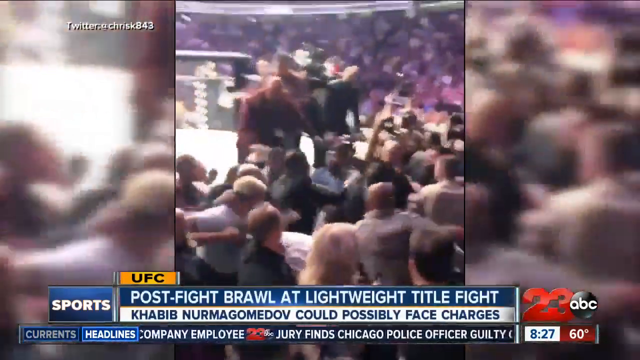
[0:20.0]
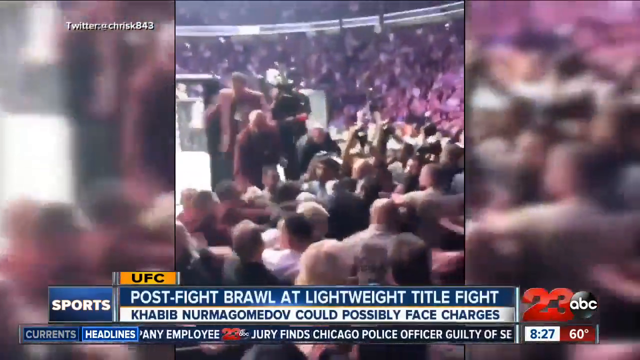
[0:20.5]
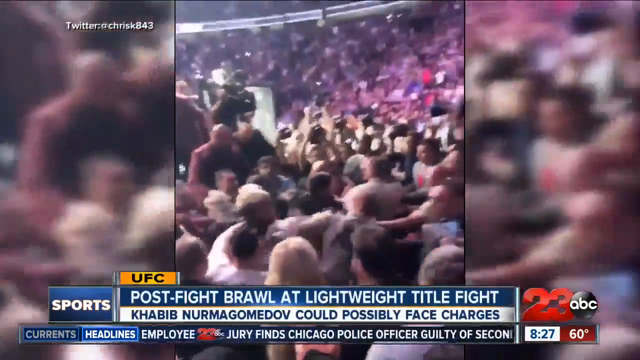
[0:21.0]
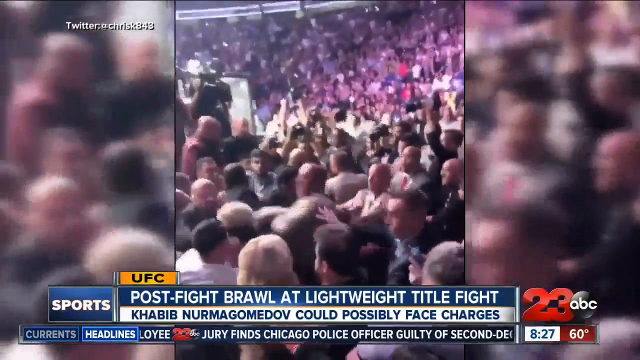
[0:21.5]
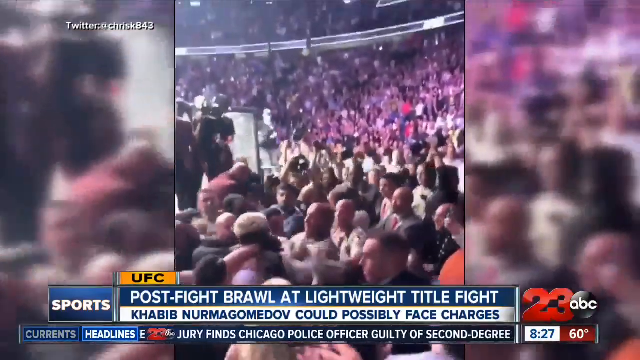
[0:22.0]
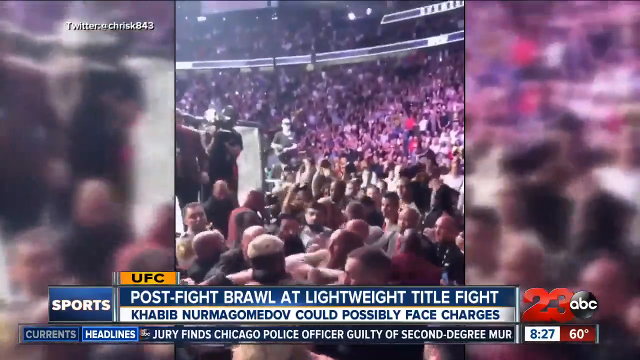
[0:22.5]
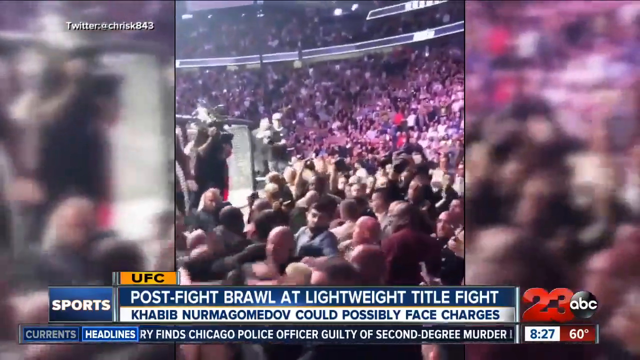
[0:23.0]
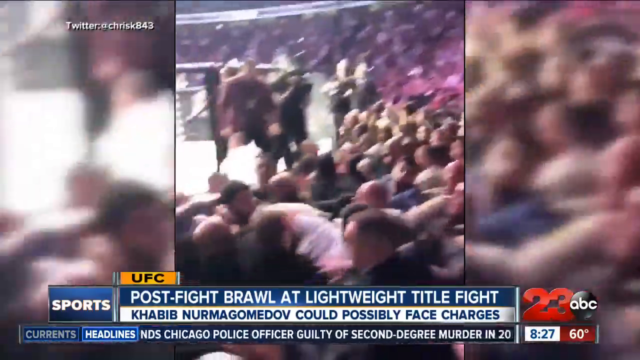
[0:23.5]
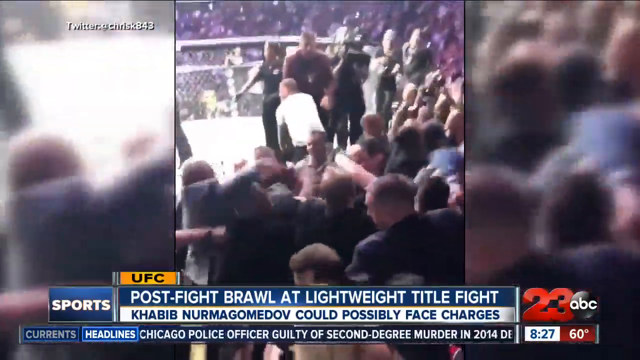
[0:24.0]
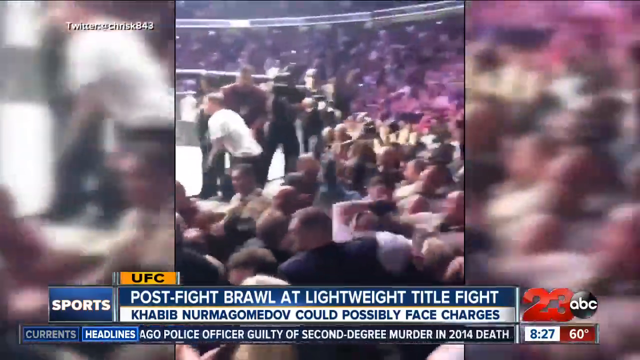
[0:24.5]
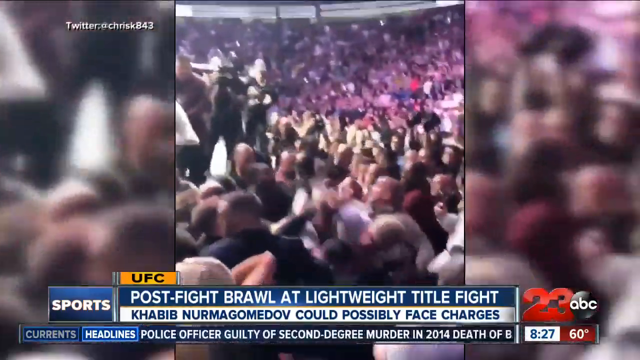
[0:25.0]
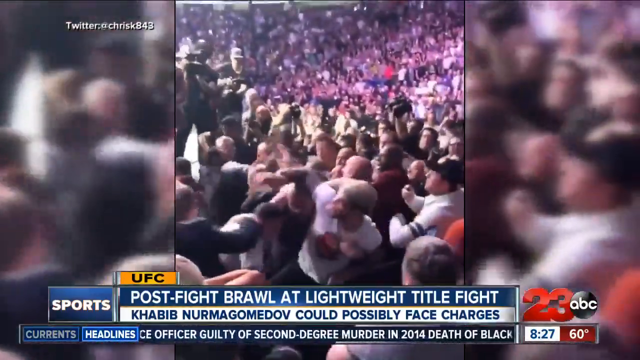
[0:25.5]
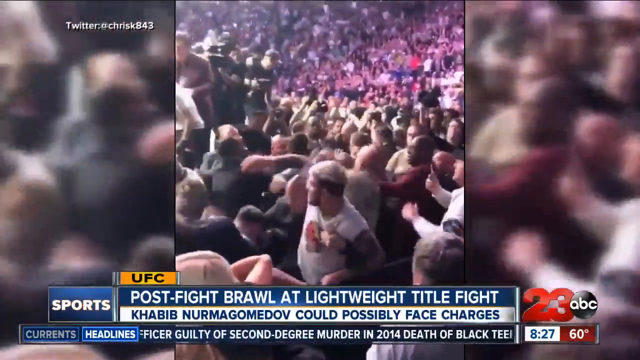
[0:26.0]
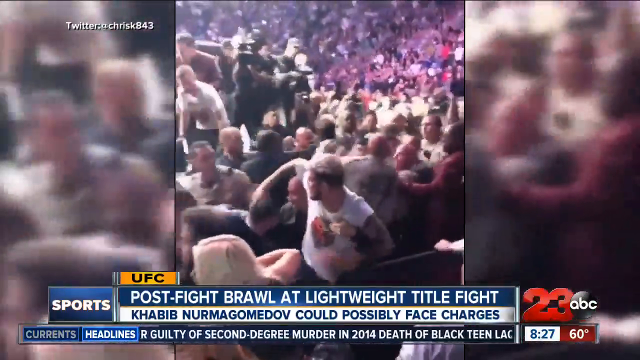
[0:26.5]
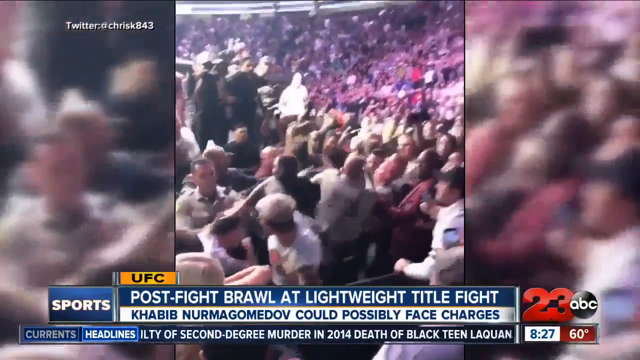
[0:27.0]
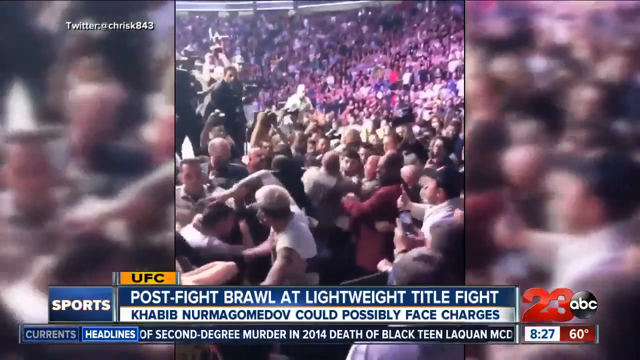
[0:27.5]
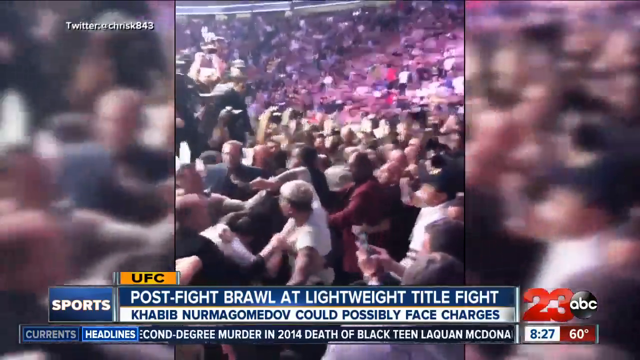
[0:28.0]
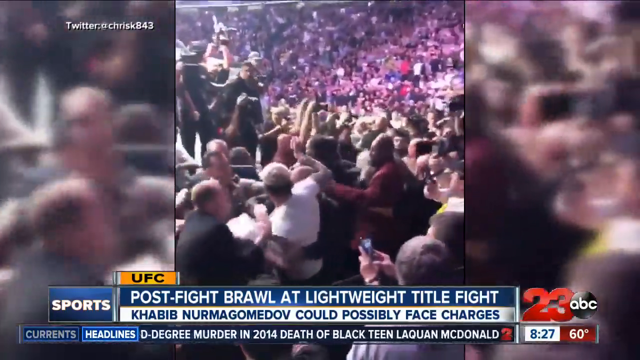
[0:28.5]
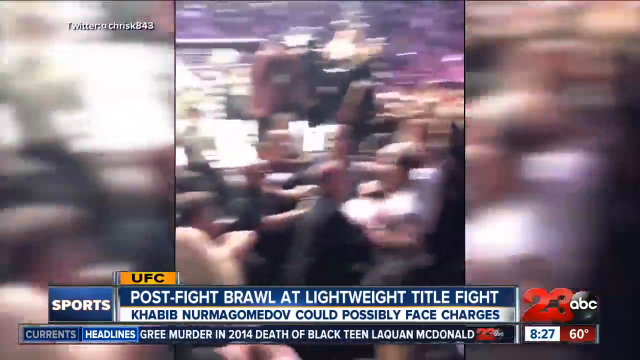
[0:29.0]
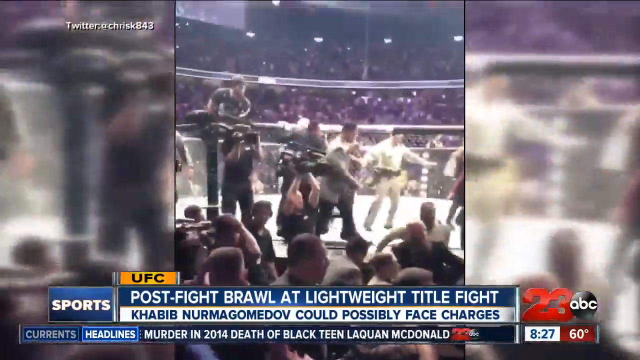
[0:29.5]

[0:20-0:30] Footage of the incident plays with on-screen text about a post-fight brawl after a lightweight title fight, mentioning Khabib and that someone "could possibly face charges." A man looks like he jumps out of the stands. The report is from 23 ABC News, and "Twitter" appears at the top of the screen. People throw punches throughout the stands, and several people hold cameras, though the footage is very shaky. The camera focuses back on the ring, where people are fighting and throwing punches.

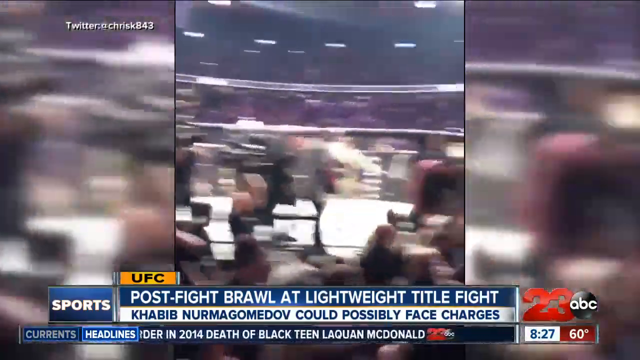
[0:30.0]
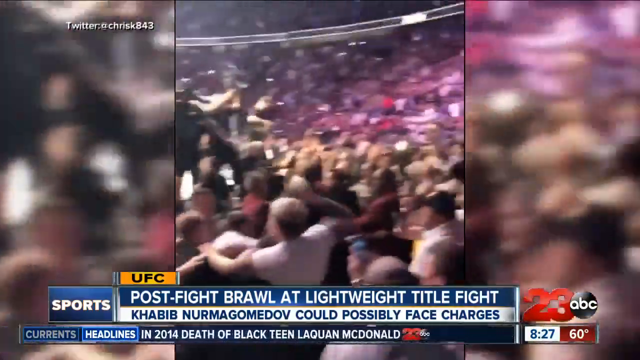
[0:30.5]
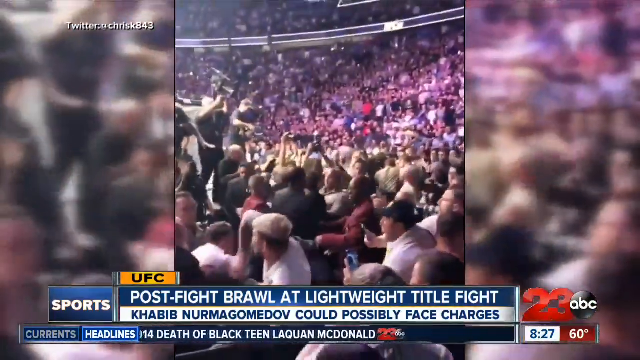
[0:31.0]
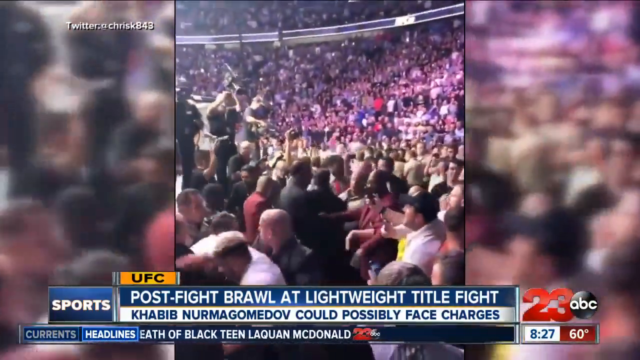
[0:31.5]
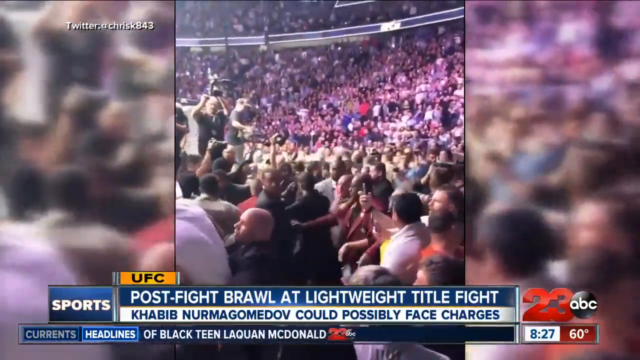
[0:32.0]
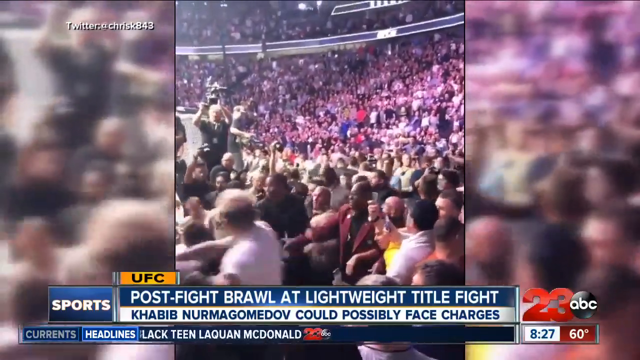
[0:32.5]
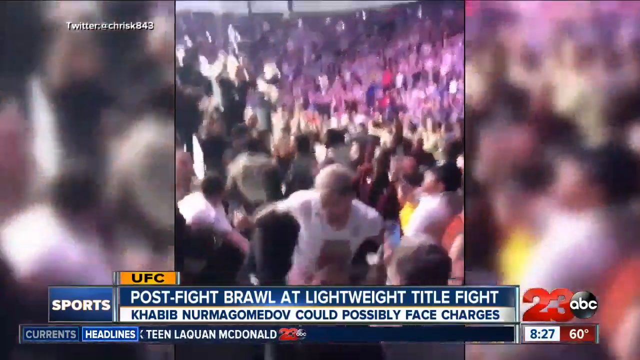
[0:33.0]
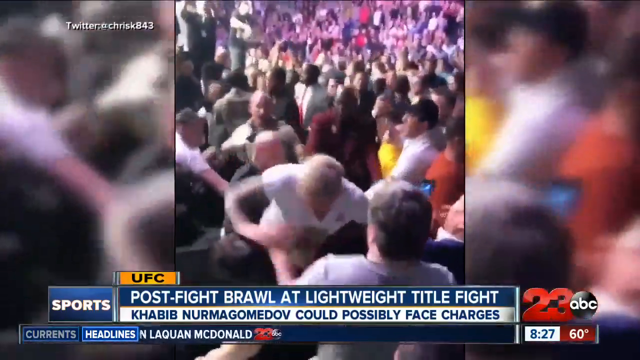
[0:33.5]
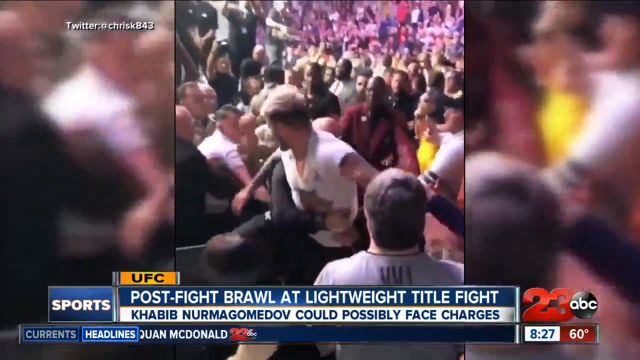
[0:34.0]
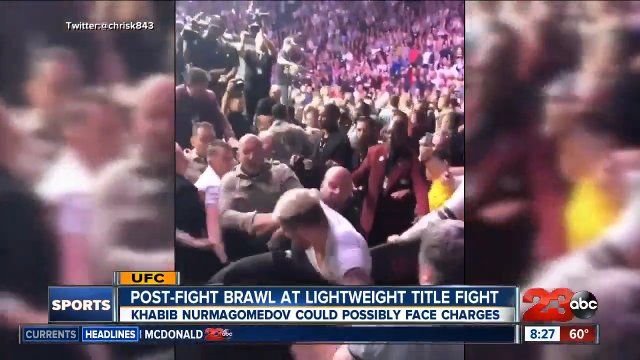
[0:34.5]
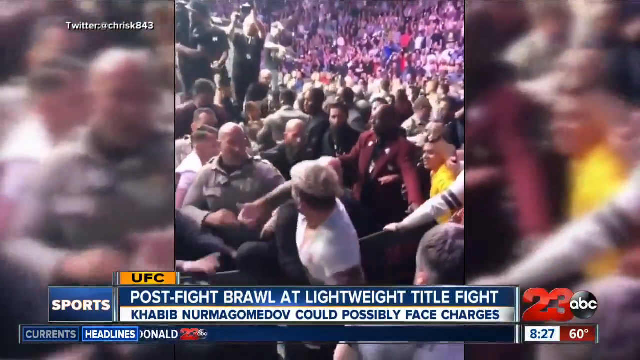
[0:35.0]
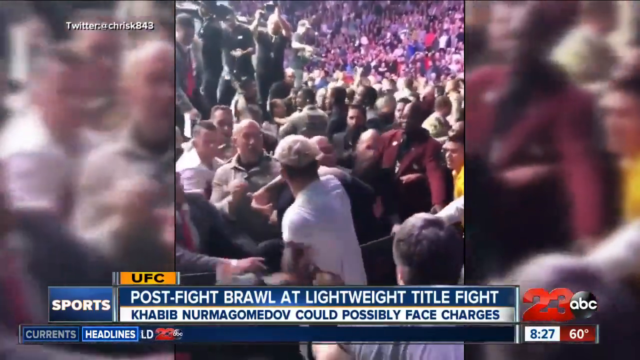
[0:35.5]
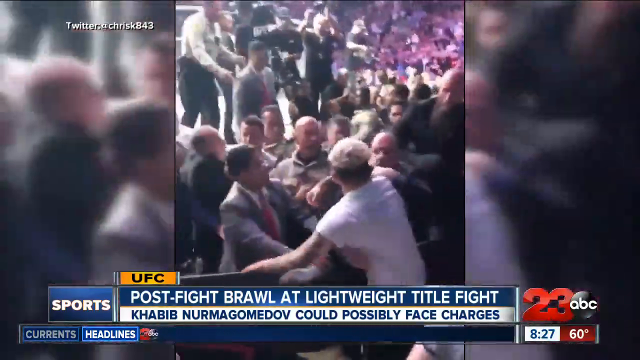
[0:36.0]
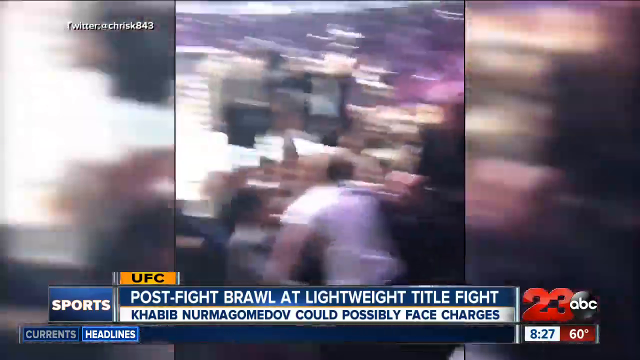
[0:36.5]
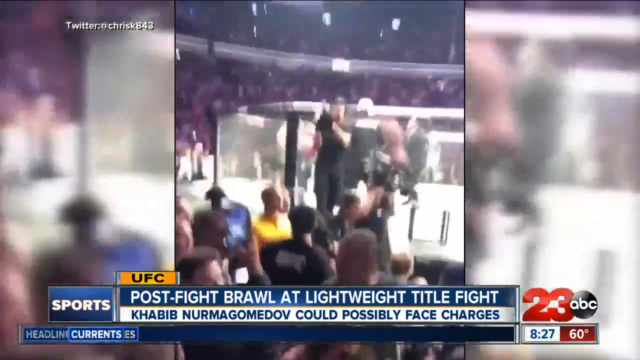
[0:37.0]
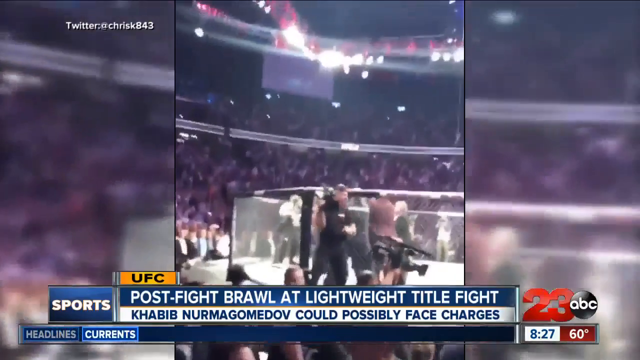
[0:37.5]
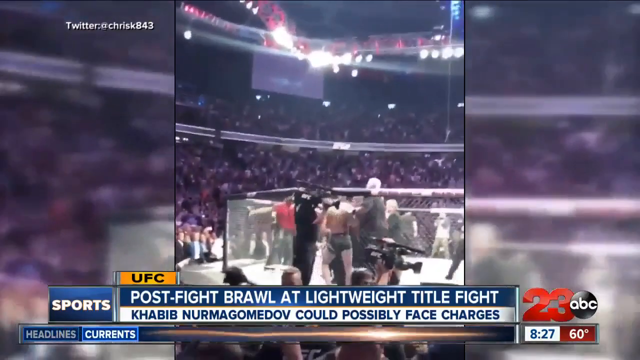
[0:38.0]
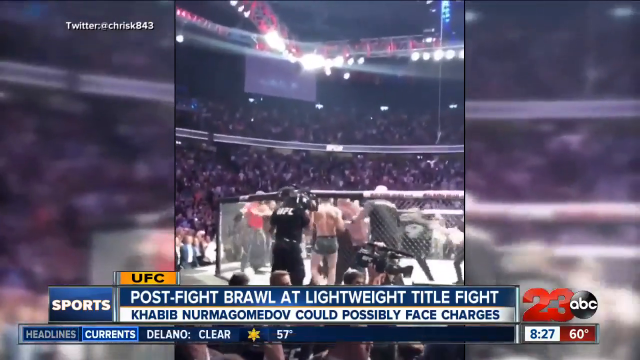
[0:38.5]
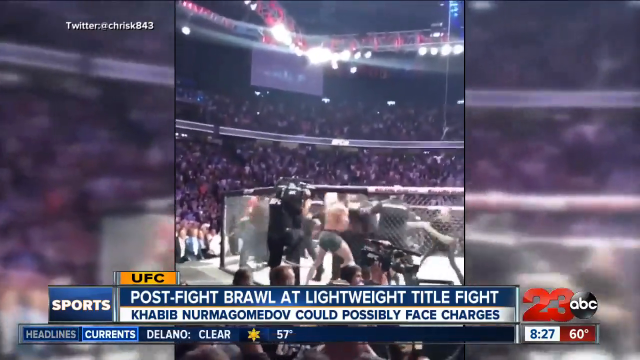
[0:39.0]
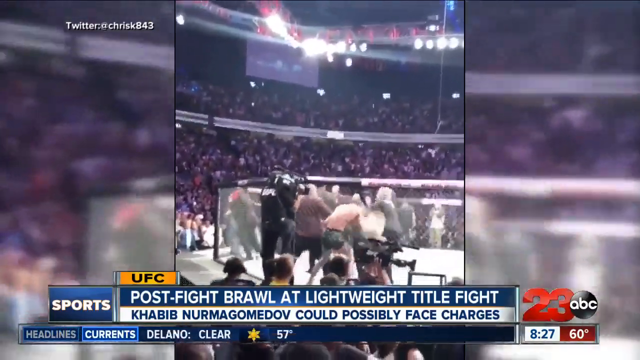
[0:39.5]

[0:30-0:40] The footage starts out somewhat blurry. Text refers to a post-fight brawl in a lightweight title fight, reported by 23ABC, and the screen shows 8:27 and 60 degrees. Headlines are displayed. People fight everywhere: inside the cage, a cameraman is fighting, and possibly people at the edge of the cage are fighting, throwing punches.